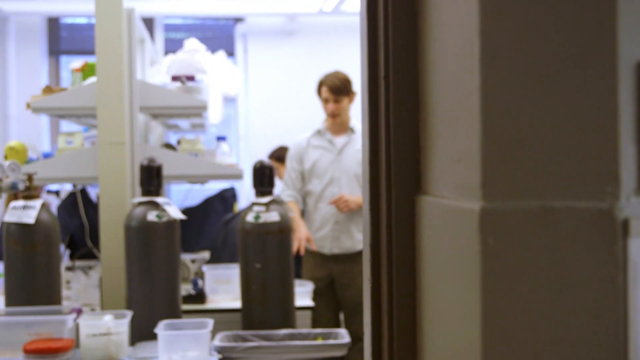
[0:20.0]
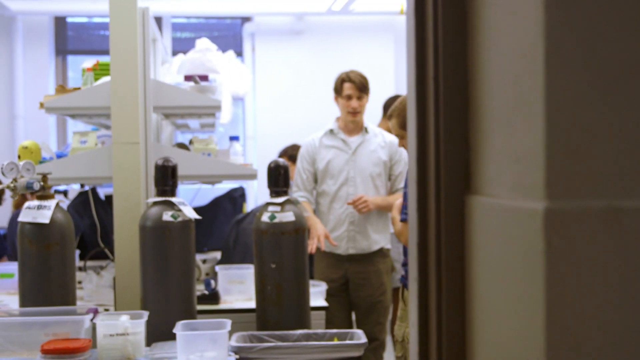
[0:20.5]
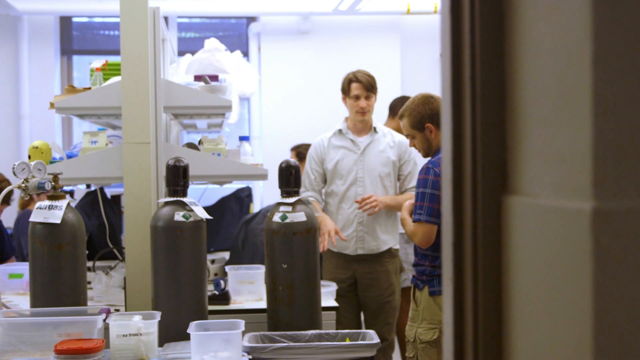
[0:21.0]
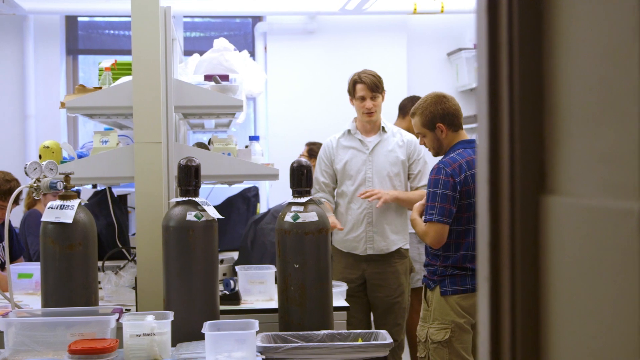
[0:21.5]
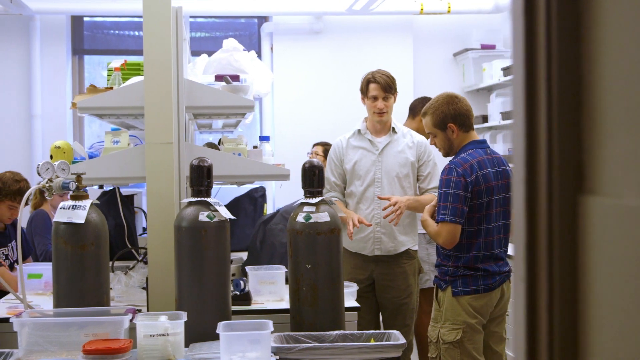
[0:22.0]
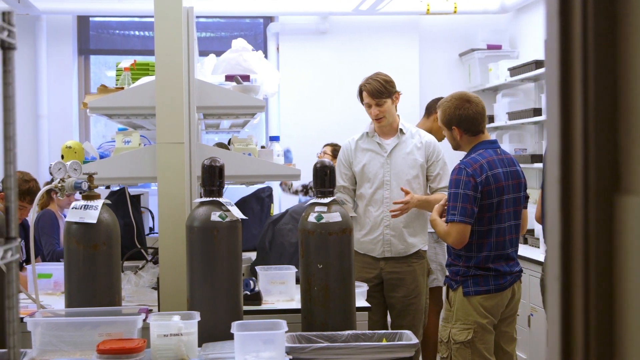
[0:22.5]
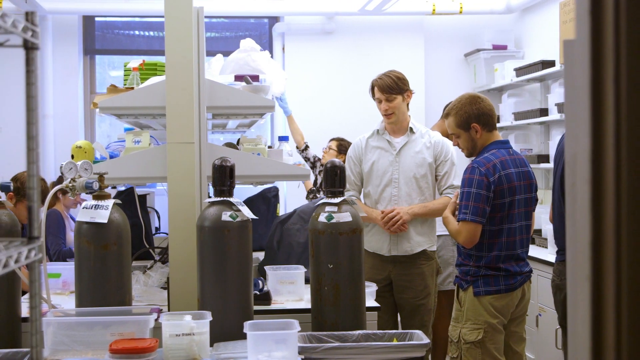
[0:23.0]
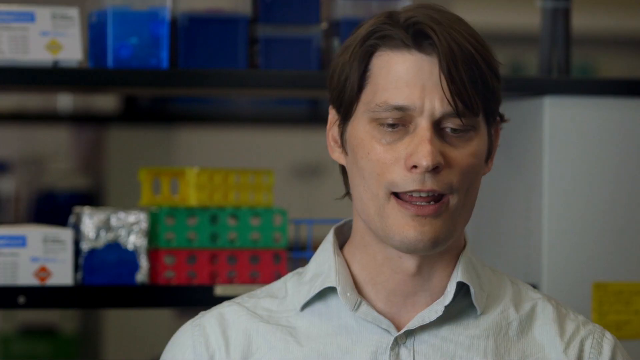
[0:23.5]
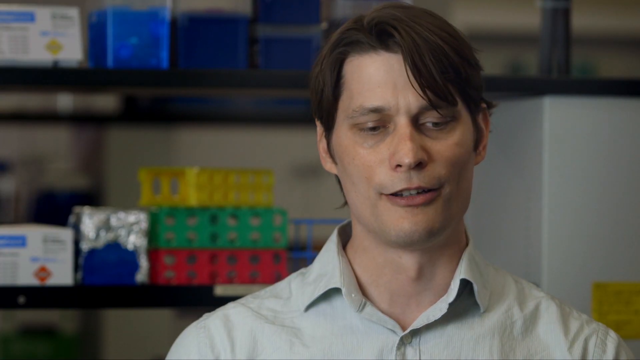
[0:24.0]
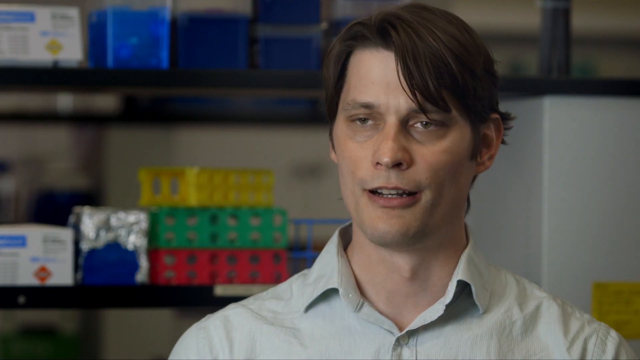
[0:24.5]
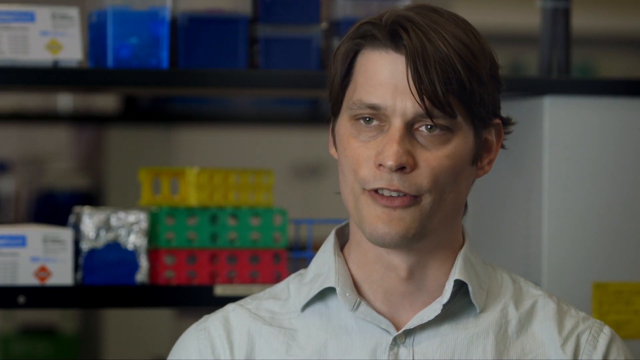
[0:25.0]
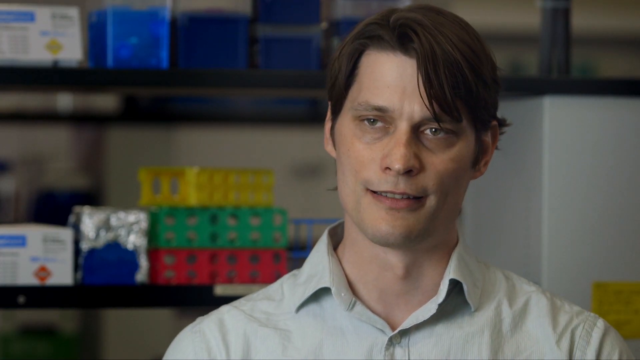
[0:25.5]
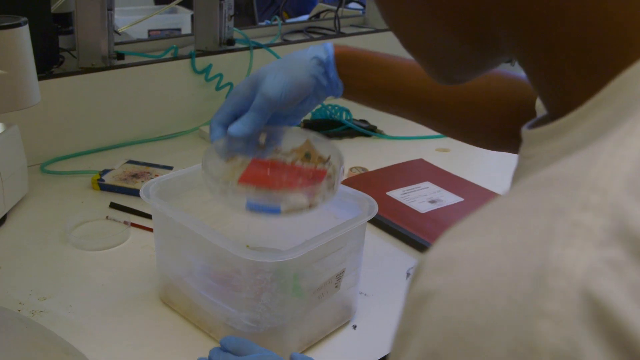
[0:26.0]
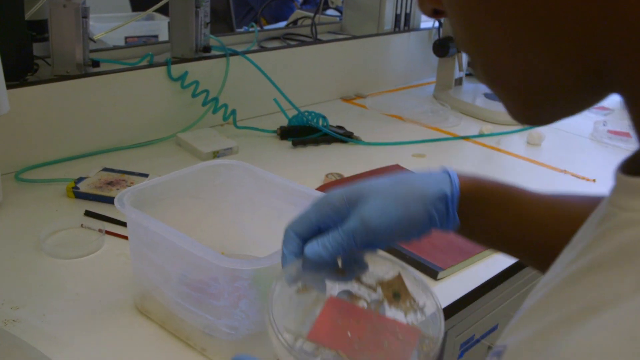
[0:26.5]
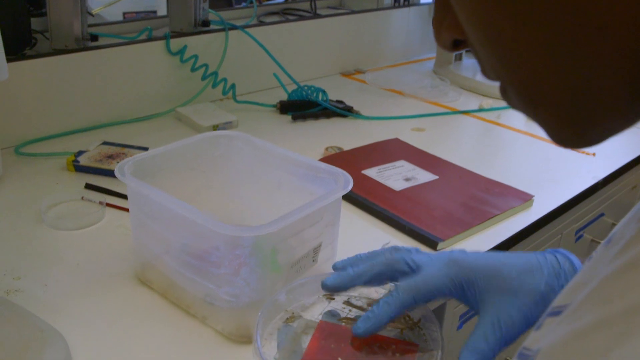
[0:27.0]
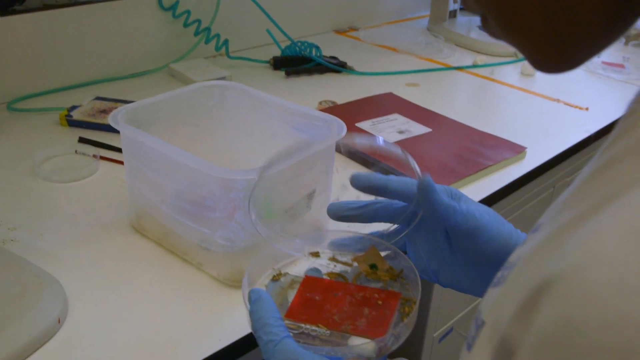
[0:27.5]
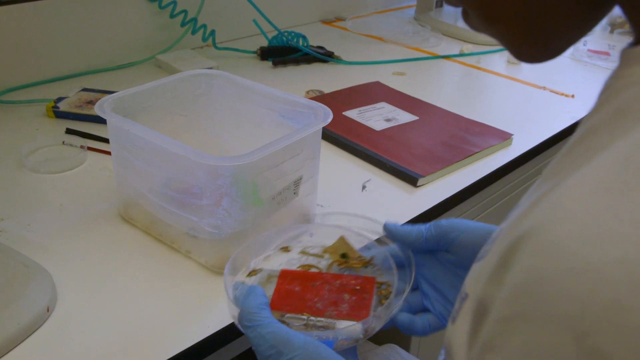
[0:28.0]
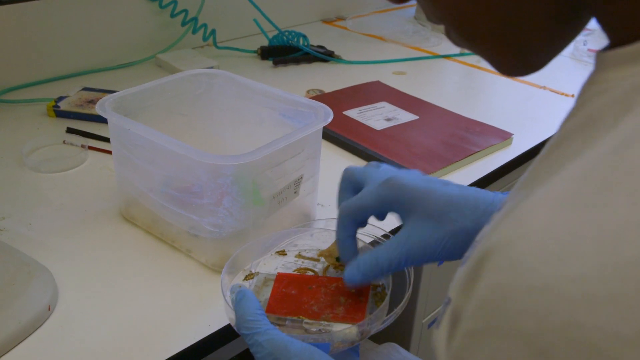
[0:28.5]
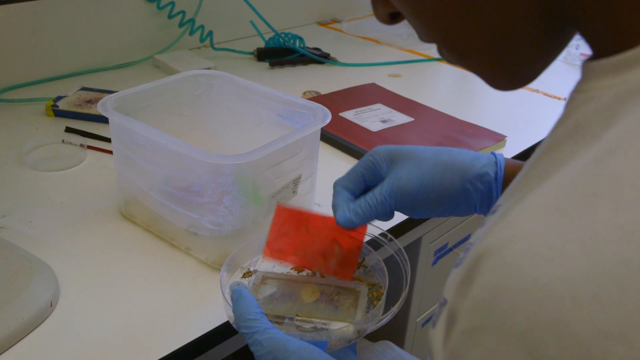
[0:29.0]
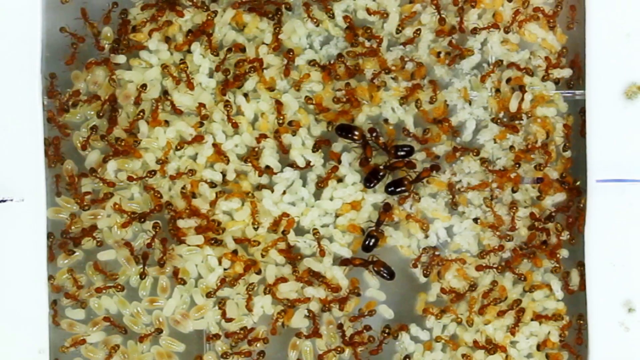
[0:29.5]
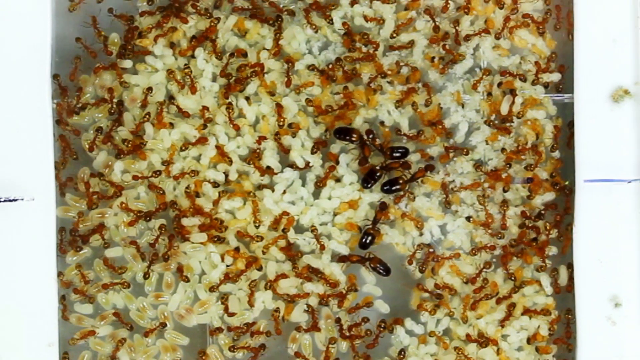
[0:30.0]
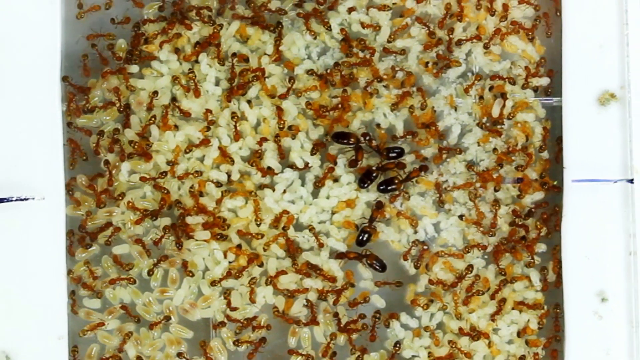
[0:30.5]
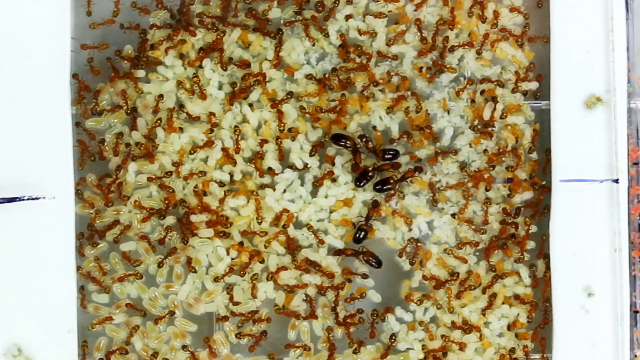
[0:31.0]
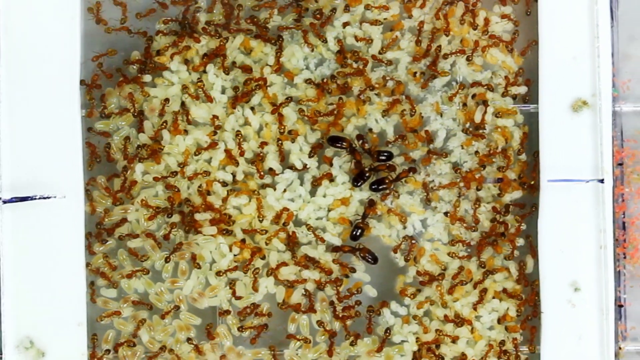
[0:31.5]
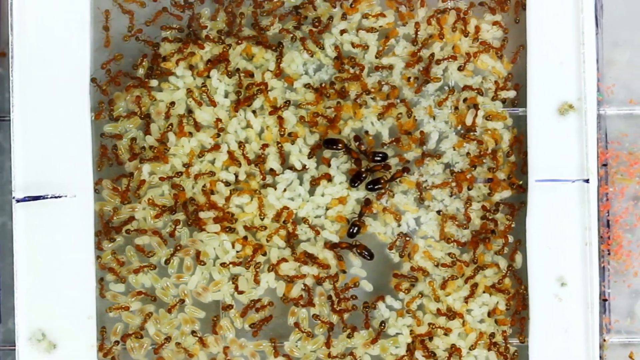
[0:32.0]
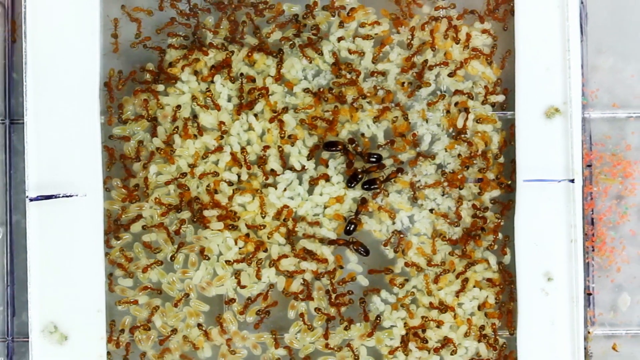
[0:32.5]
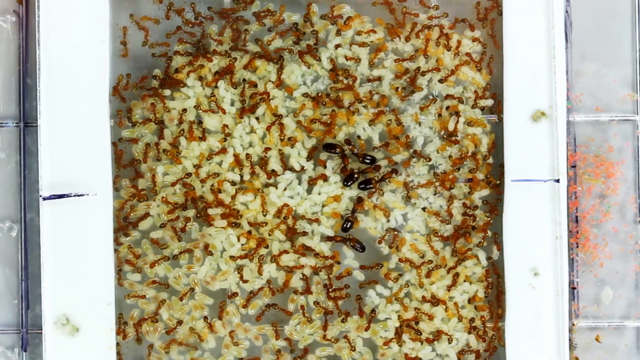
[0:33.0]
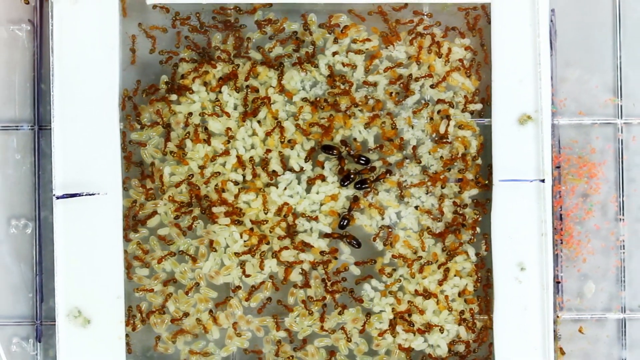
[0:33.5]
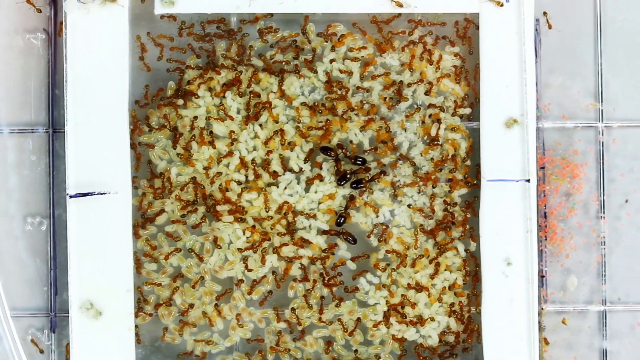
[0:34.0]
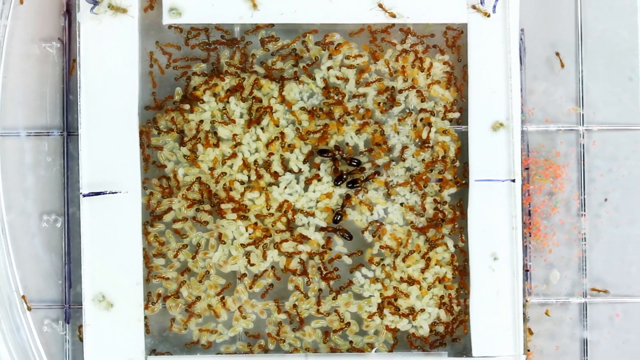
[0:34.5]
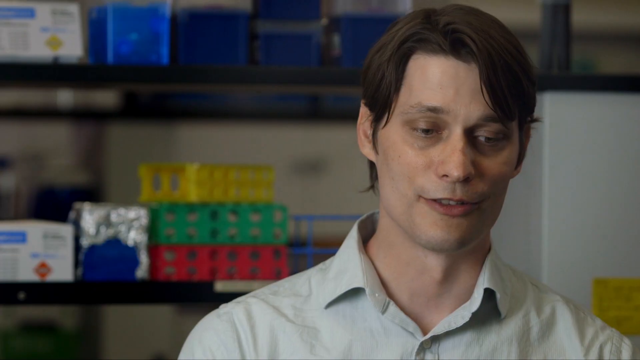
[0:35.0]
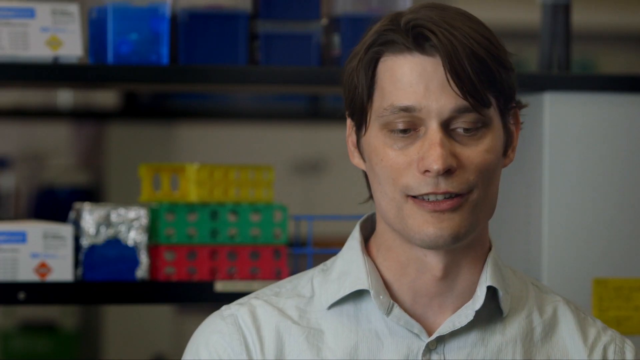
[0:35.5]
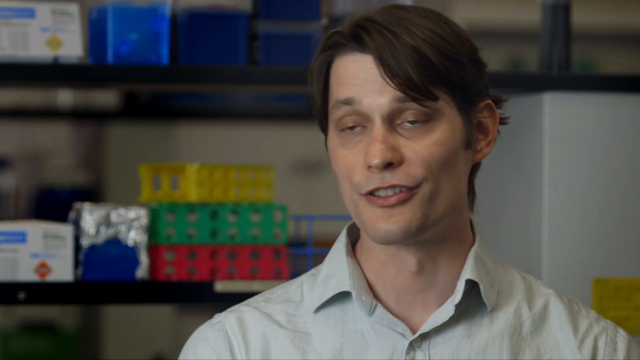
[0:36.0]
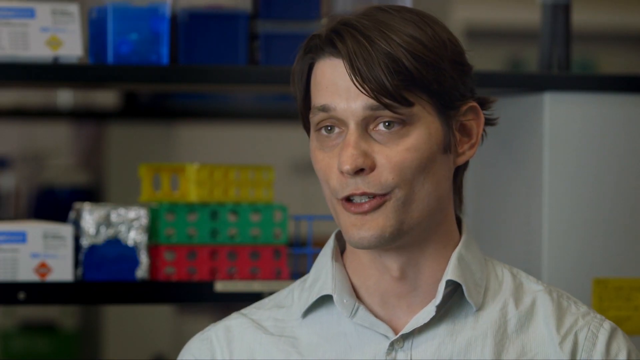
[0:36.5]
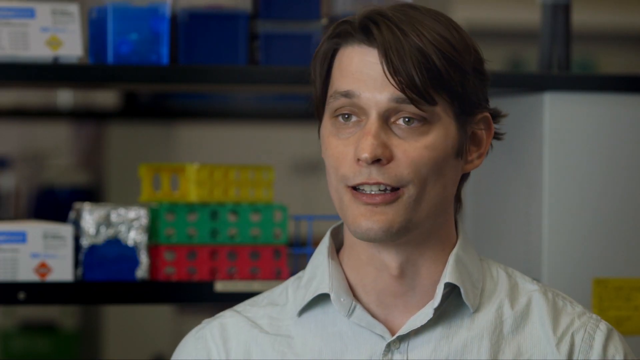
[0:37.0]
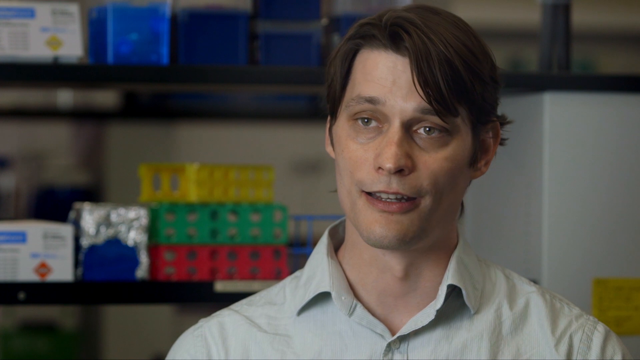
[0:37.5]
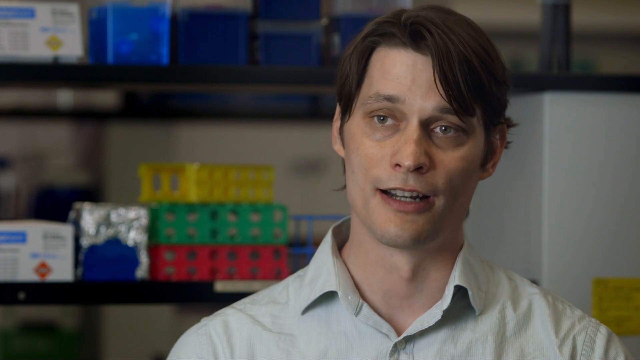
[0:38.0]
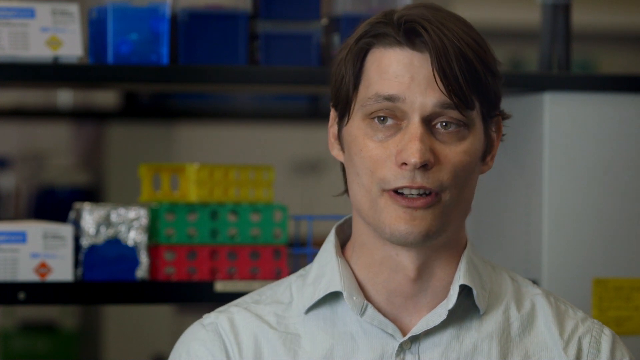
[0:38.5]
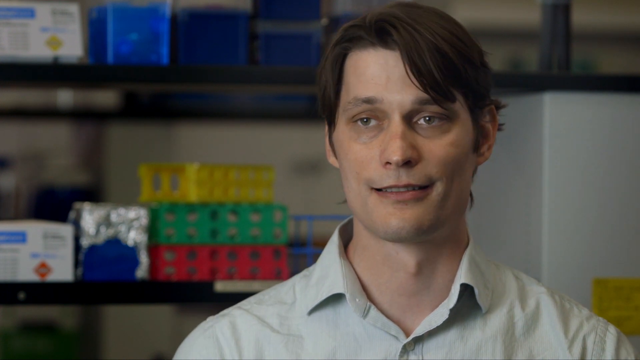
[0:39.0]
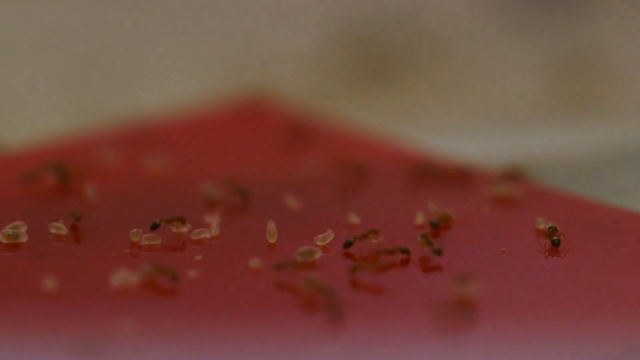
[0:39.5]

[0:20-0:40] The view looks through an open door into a room beyond it, a laboratory of some sort. The man seen earlier stands in front of some tall canisters of gas, explaining something to a shorter student who stands facing him and wears blue and white. The image changes to the man speaking to the camera and then back to the lab, where a person with blue gloves pulls a petri dish out of a white plastic container. An overhead shot shows numerous smaller ants, most with amber-brownish bodies. Several in the center group have larger bodies with dark end pieces. All of the ants seem to be on top of a pile of white eggs. The video cuts back to the man speaking to the camera, then to a view of ants from above crawling around on a red surface.